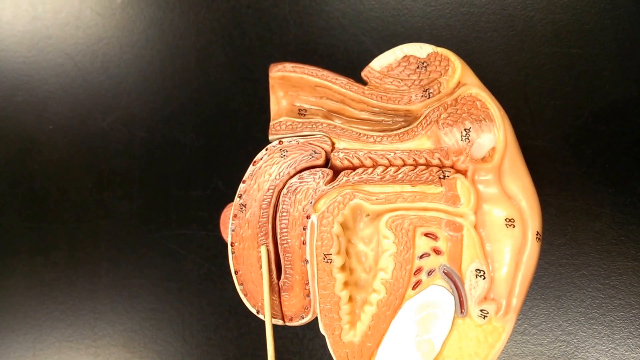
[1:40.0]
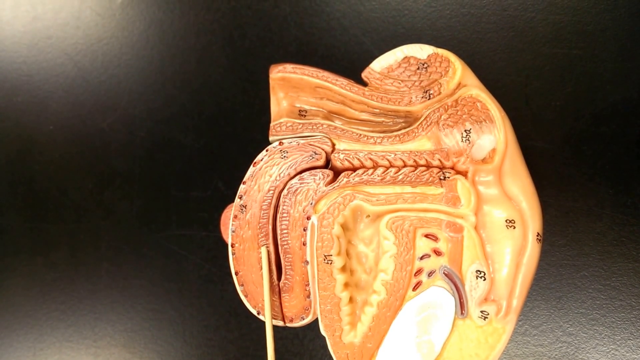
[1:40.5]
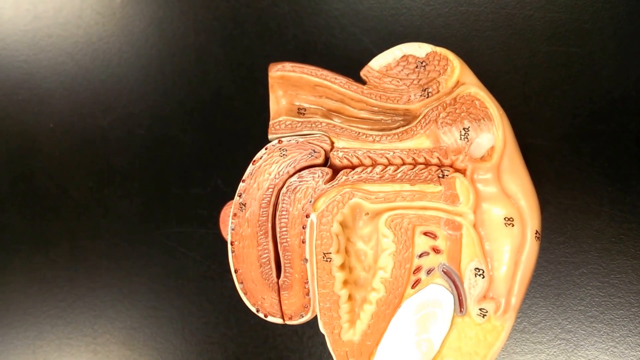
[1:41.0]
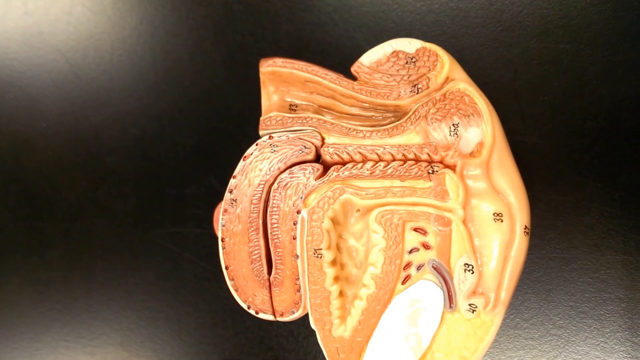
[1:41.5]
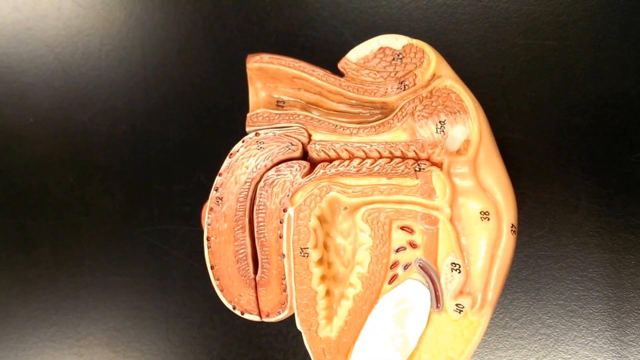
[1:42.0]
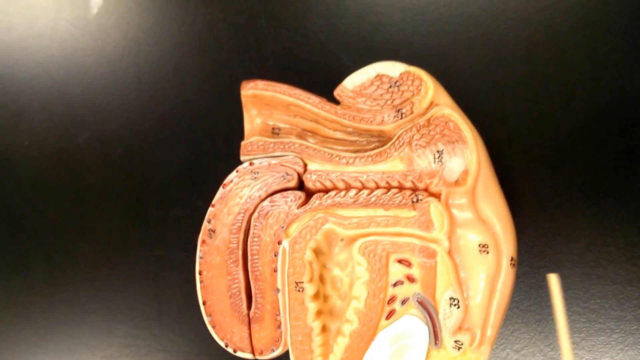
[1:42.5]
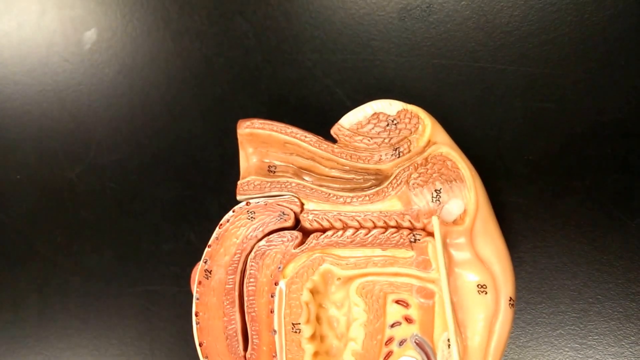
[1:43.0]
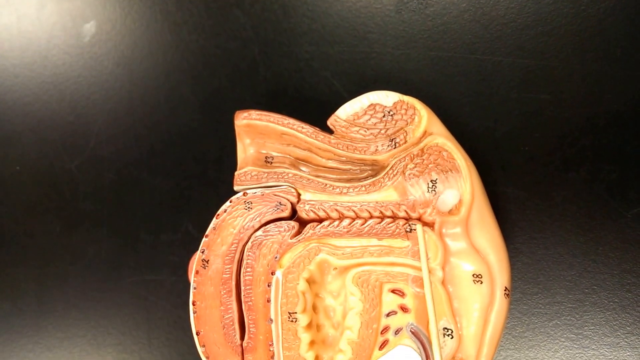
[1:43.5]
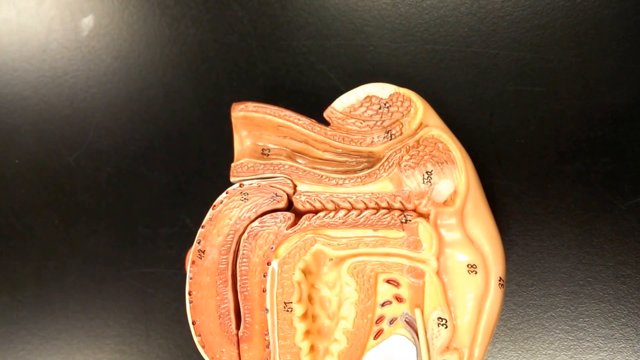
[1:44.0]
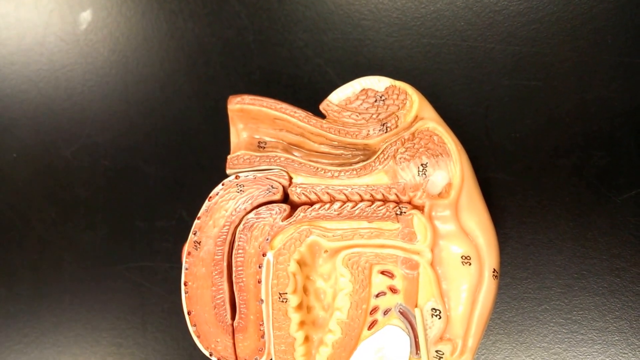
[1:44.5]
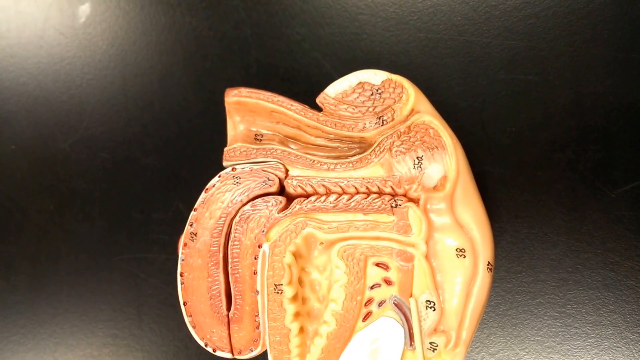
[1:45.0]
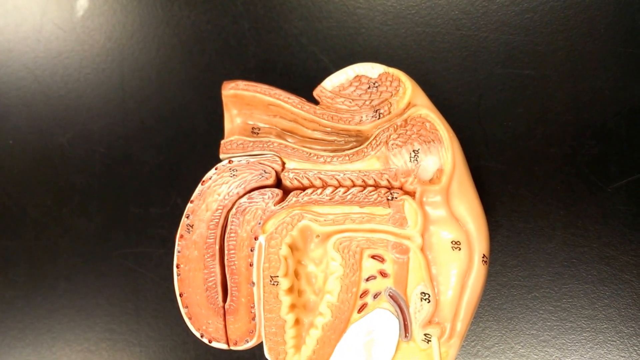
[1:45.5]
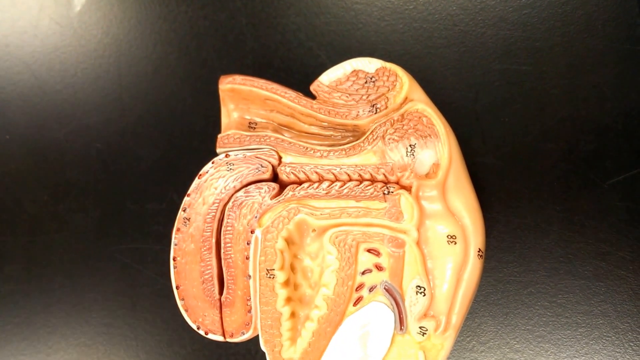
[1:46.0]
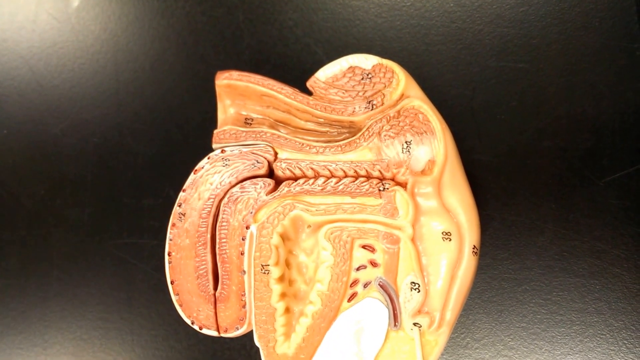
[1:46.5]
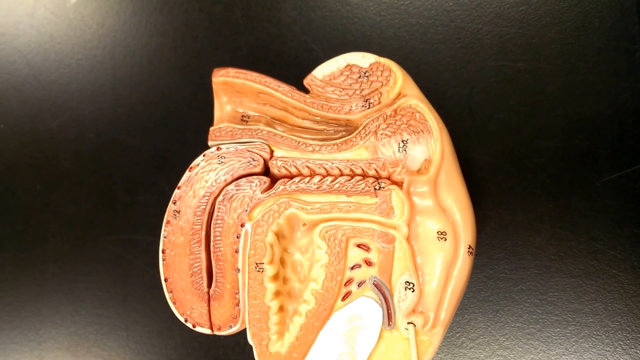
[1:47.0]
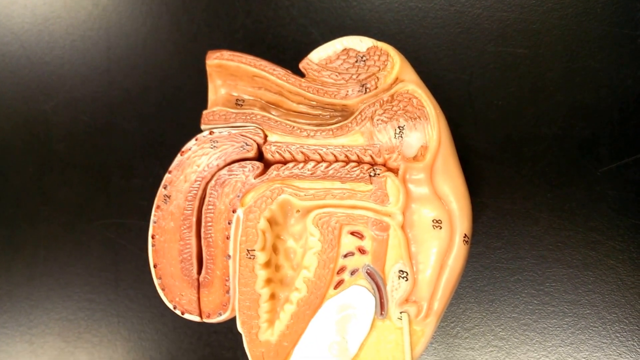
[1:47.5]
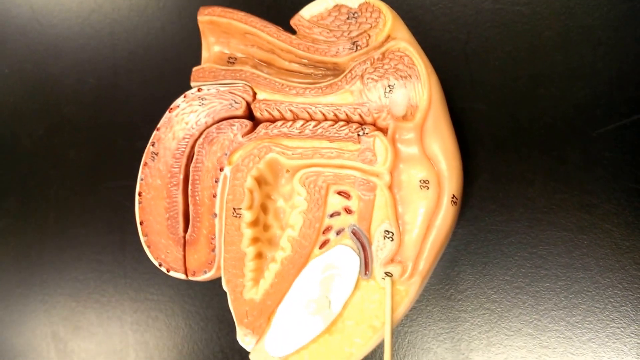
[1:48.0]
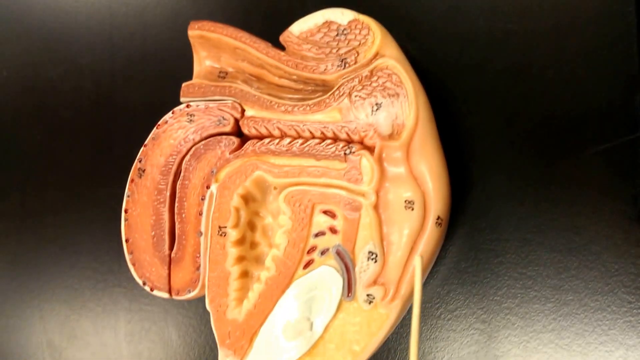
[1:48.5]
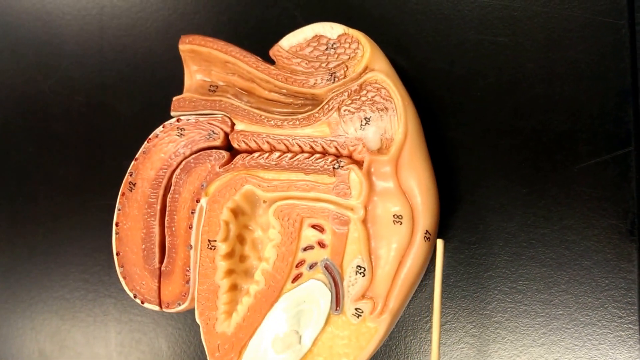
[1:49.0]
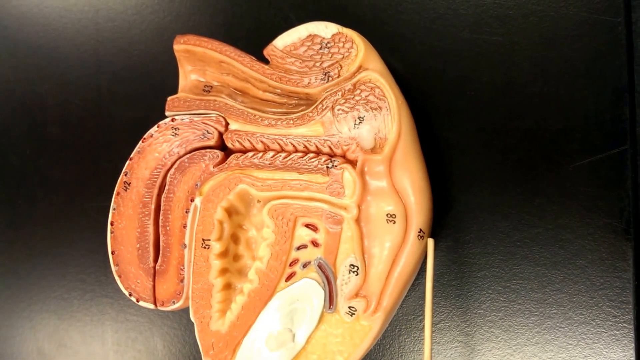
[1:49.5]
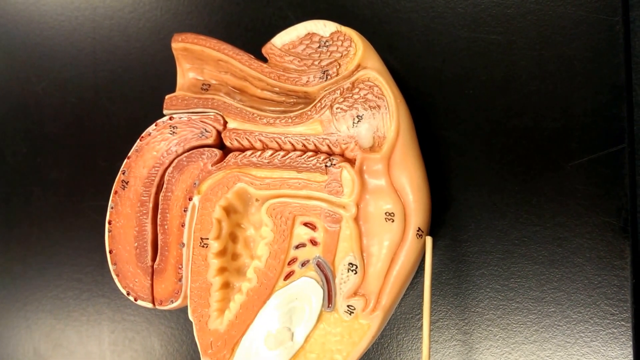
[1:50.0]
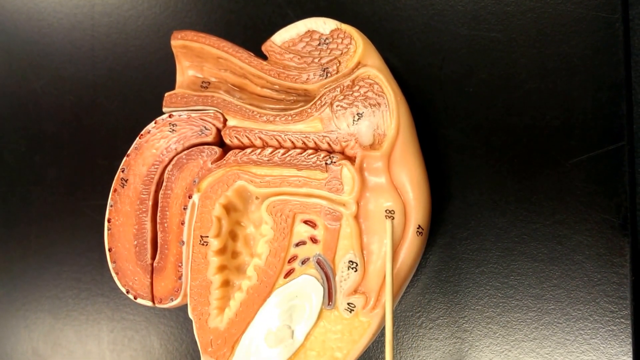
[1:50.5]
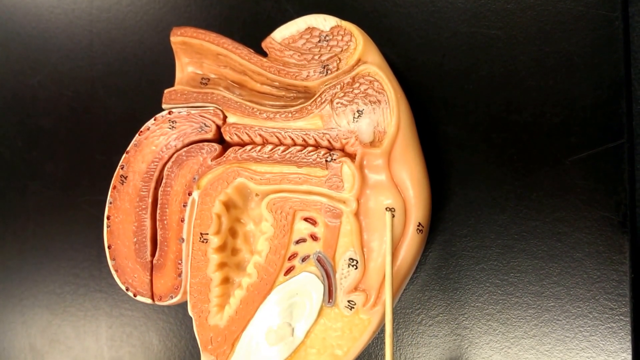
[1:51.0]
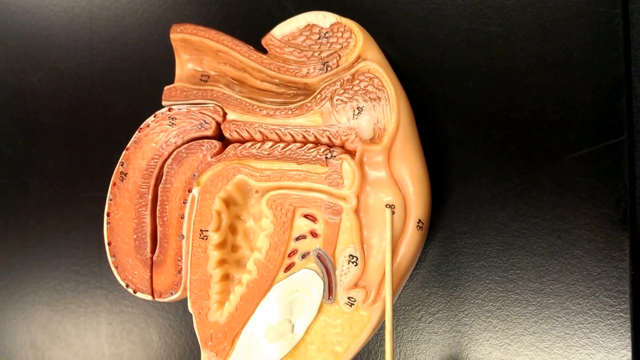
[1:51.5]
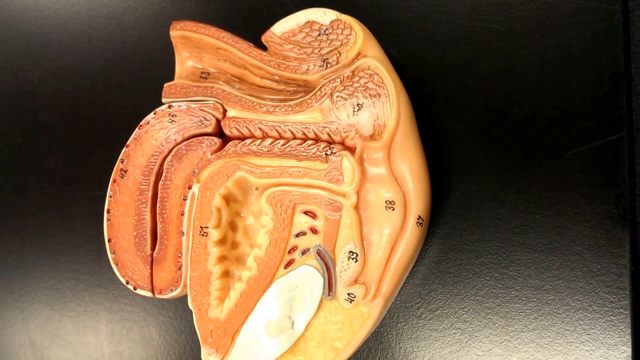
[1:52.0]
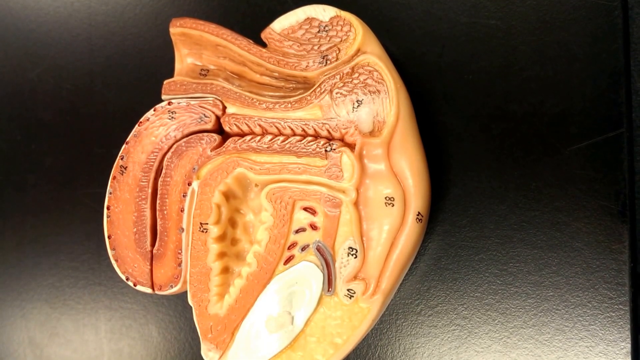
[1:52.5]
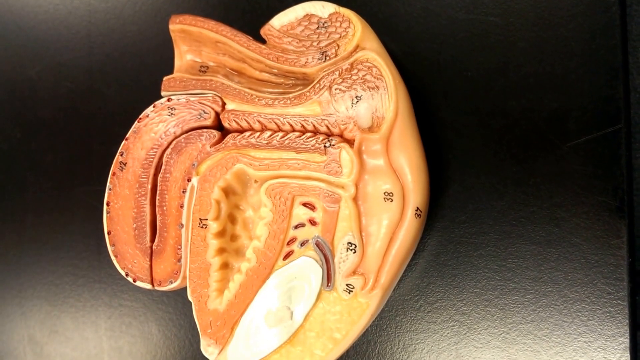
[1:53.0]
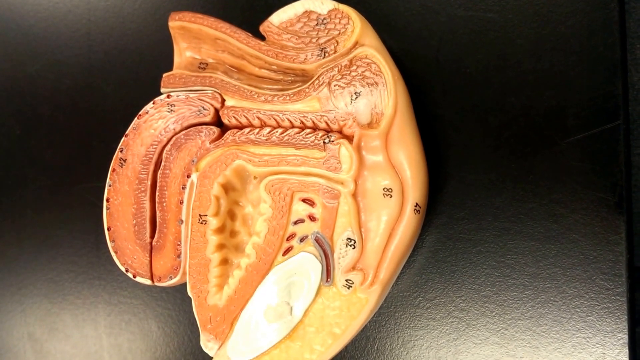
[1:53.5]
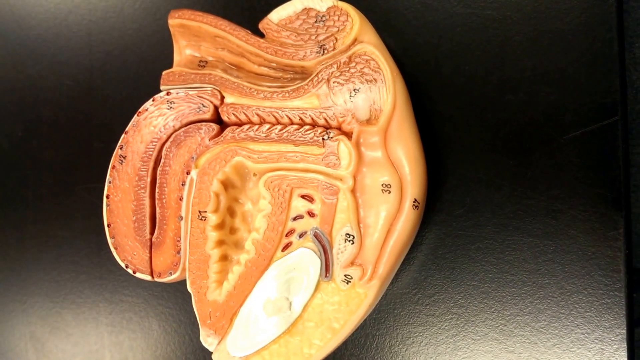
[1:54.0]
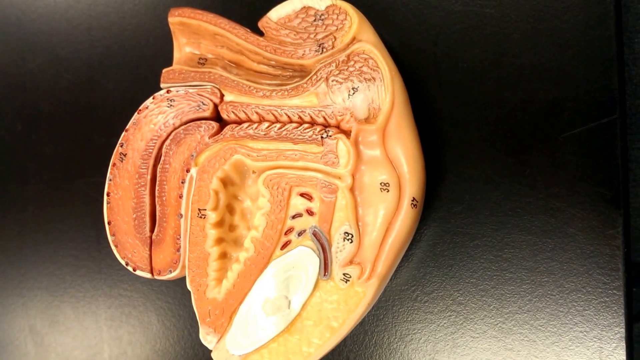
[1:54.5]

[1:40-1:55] Someone shows off a plastic side-view vivisection model of a woman's reproductive system placed on a semi-reflective black table. It is made up of various textured pink and yellow sections showing the internal elements of the reproductive system, and most pieces are labeled with black numbers. The person uses a wooden dowel or stick coming from the middle center off camera to point out various sections. They start by pointing at the leftmost mass, a sort of semi-crescent pink shape with ridges, then take the stick off it. The camera slowly pans upward and they point the stick toward a tunnel section in the center of the model. They then move downward, point toward various yellow sections, and tap on a section filled with red and purple cylinders. The camera moves downward and they point at a fatty-looking mass labeled number 40, then at a skin outer layer labeled number 37, then move to a bulbous pink section next to it labeled 38.